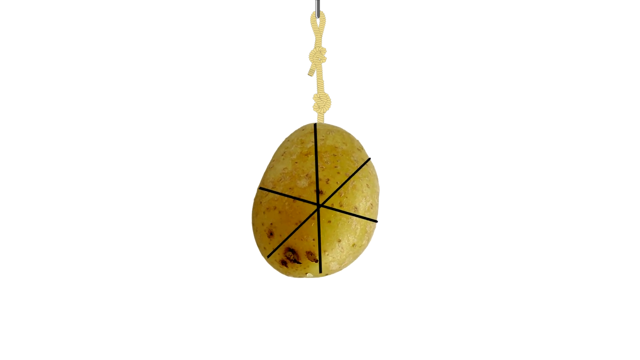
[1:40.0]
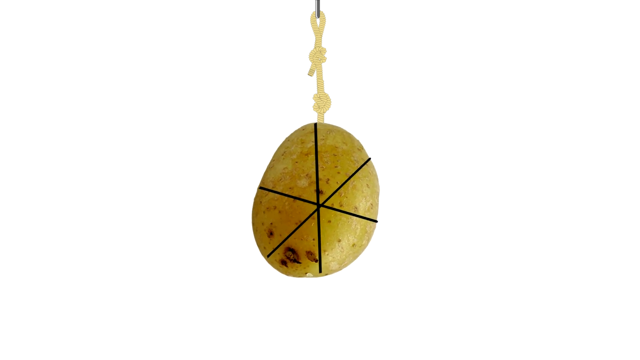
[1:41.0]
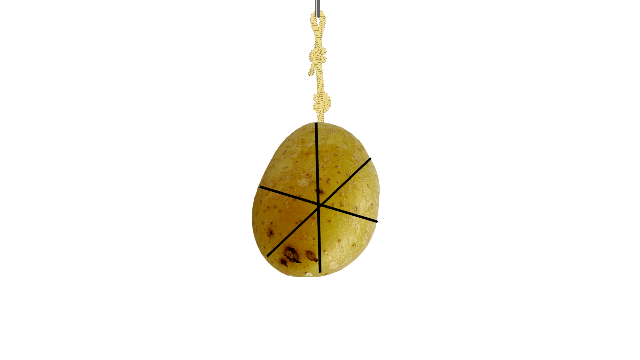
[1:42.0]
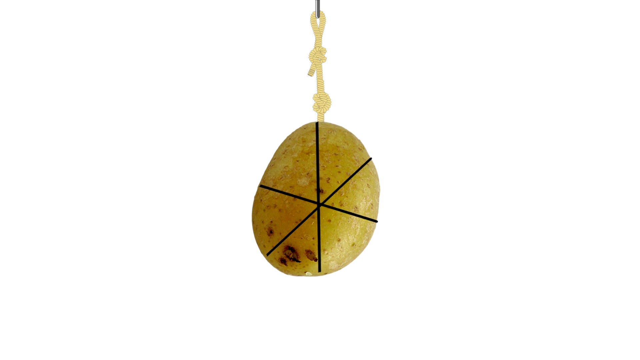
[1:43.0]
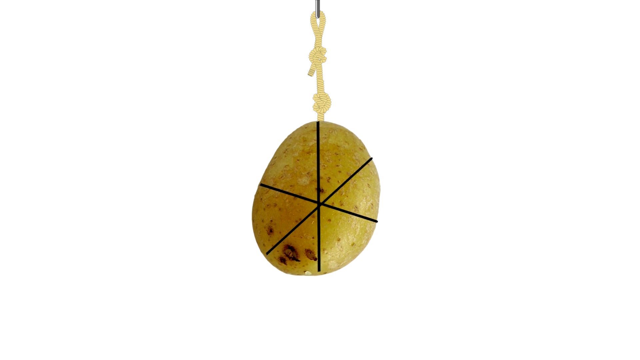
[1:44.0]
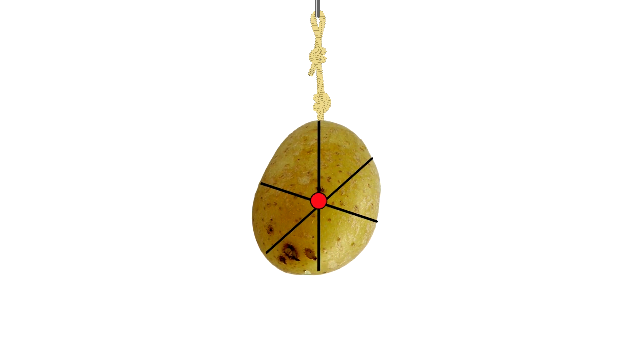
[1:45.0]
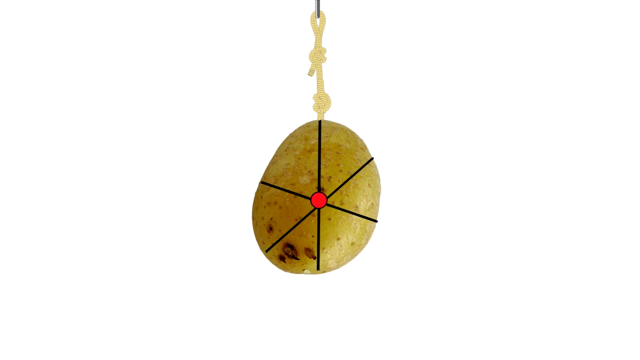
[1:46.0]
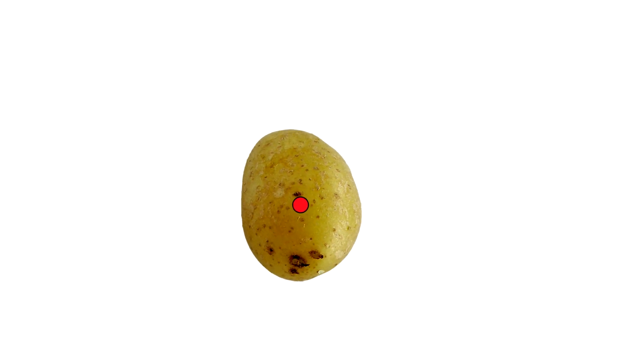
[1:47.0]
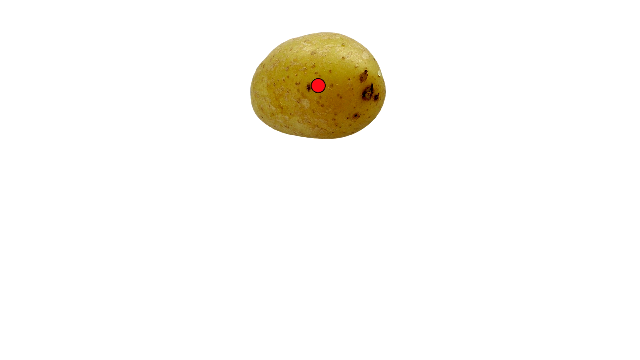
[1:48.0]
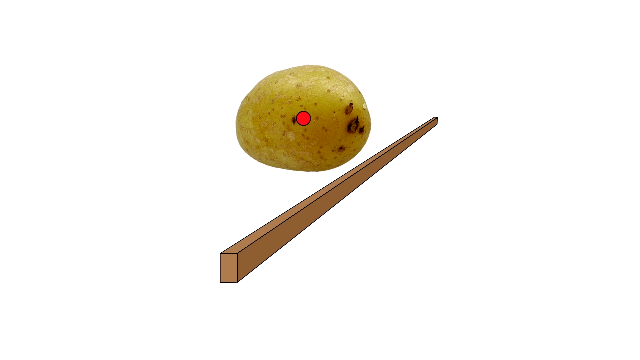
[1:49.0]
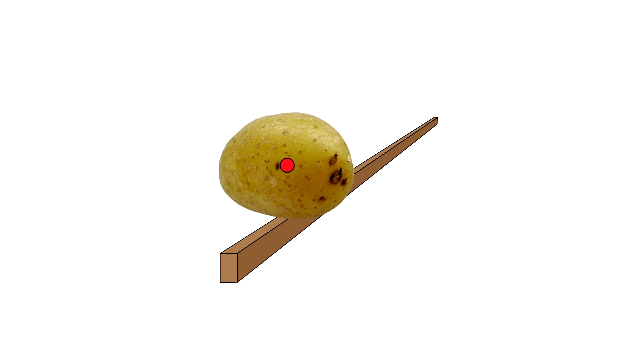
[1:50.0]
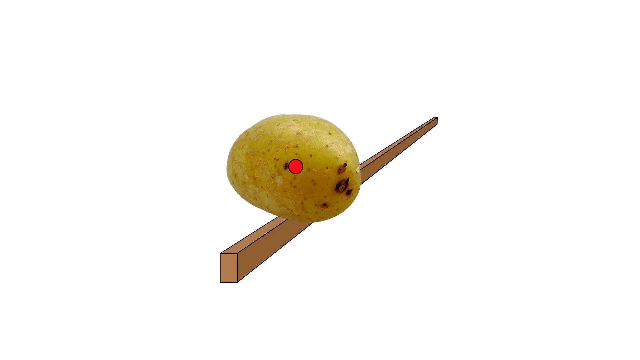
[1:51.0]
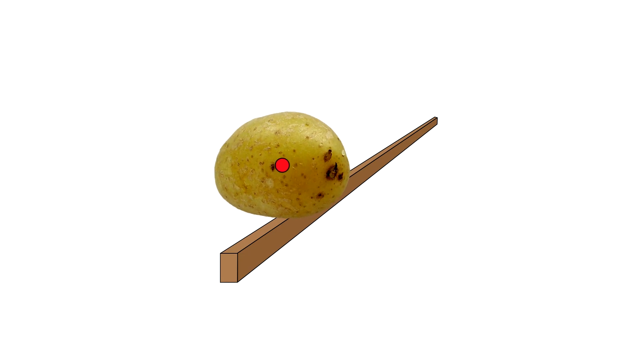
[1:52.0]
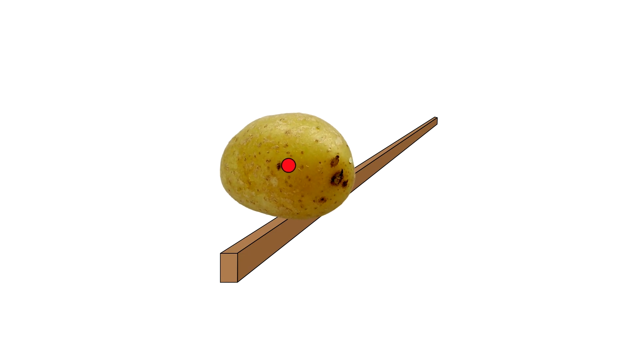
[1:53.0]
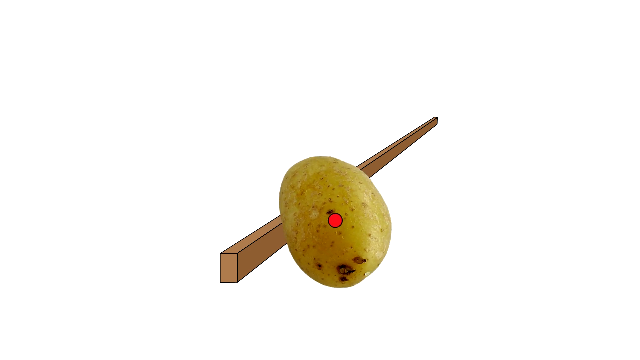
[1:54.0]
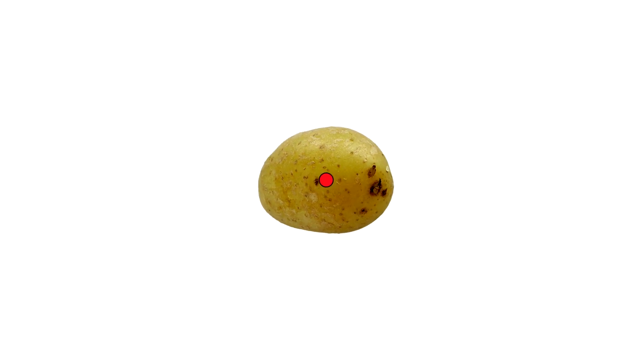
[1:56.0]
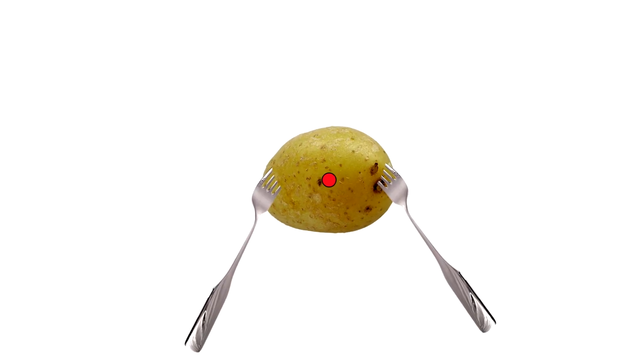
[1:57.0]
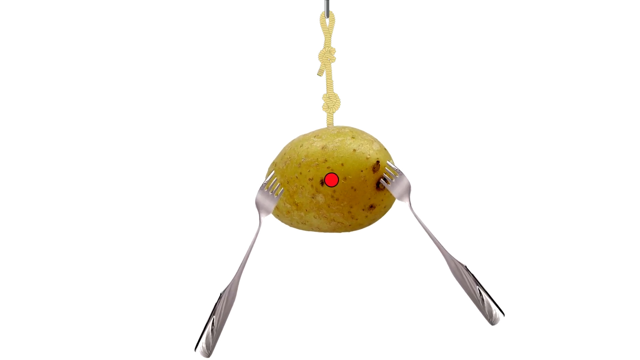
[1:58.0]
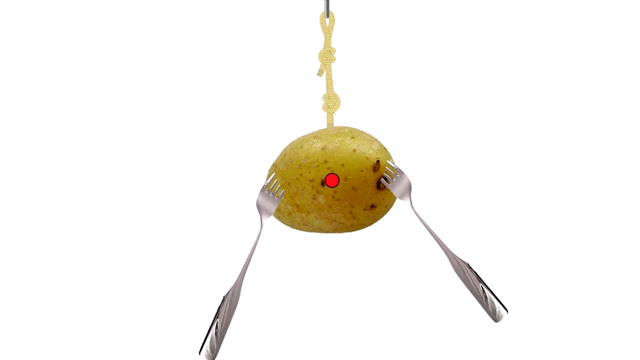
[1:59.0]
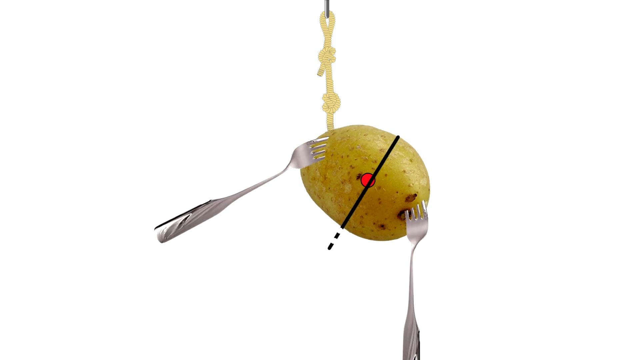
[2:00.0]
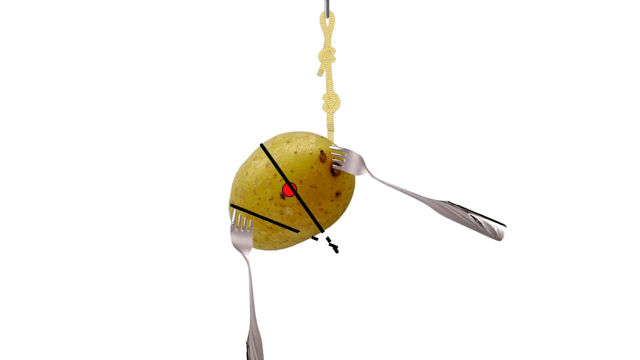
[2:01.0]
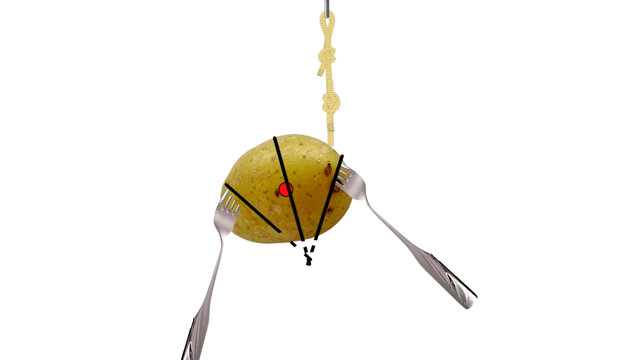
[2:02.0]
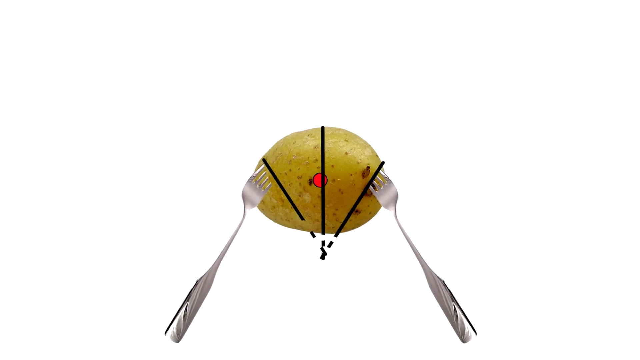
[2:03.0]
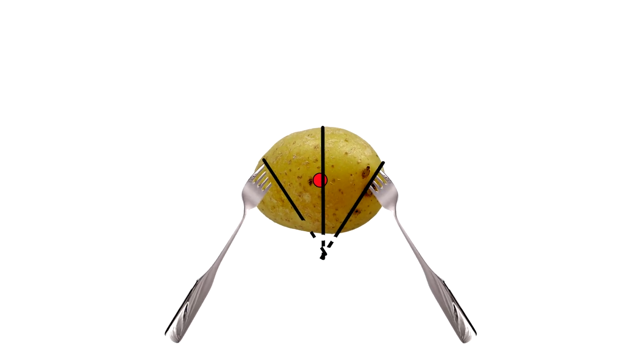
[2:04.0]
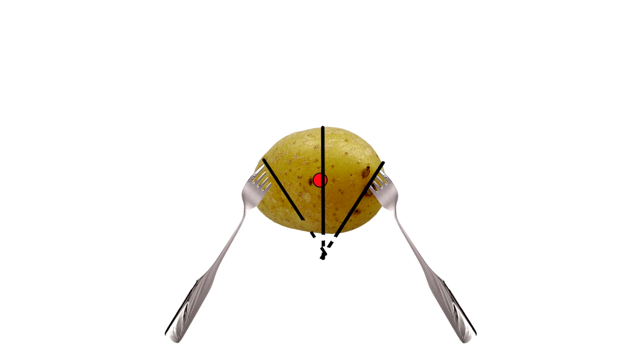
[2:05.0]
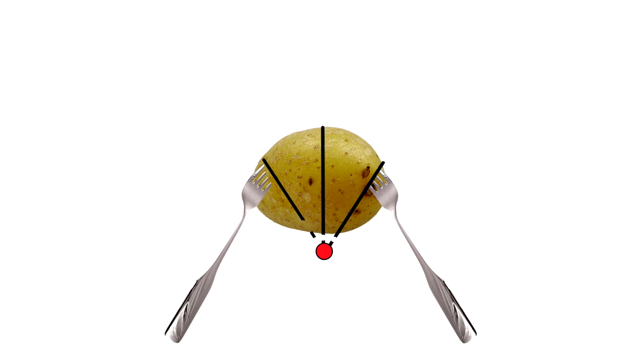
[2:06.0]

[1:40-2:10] Against a white background, a potato in the foreground is connected to a rope and a hook that stretch to the top of the frame. The potato has three black lines through it: one running vertically through the middle and two diagonal lines, one running downward and to the left and one up and to the right. A red dot appears in the middle of the potato where the lines intersect. The potato rotates to the left as the lines, hook and rope disappear. An illustration of a wooden board held edgewise appears in the middle of the frame, and the potato is placed on top of the board. The potato rocks slowly to the right, then to the left, and then rocks off to the right and falls. The board illustration disappears, leaving a blank white frame. The potato rises toward the middle of the frame. Two forks appear from the bottom and insert into the left and right sides of the potato. The potato slowly rotates to the right as a rope and hook appear above it, attaching it to the top of the frame. A black line is cut through the middle and through the left side of the potato, and a third black line is cut through the right side as the potato rocks to the left. The potato returns to its central position, and a red dot appears beneath the potato where the three black lines intersect.